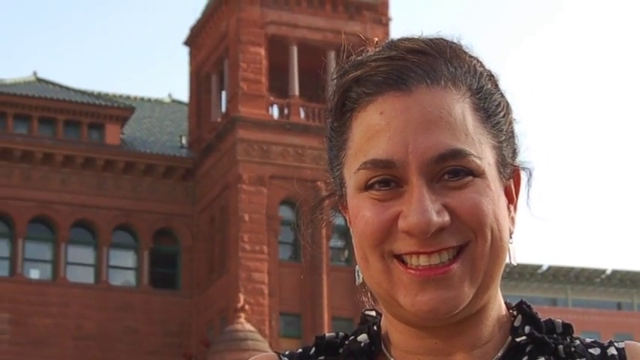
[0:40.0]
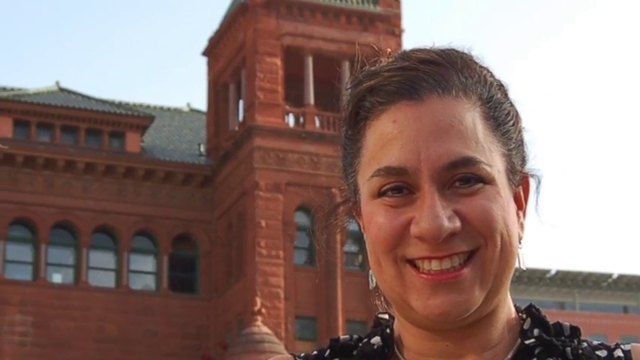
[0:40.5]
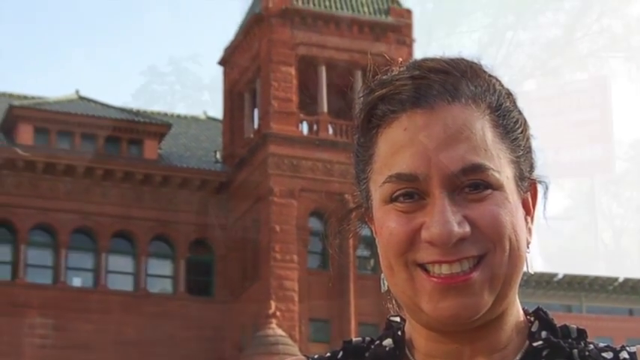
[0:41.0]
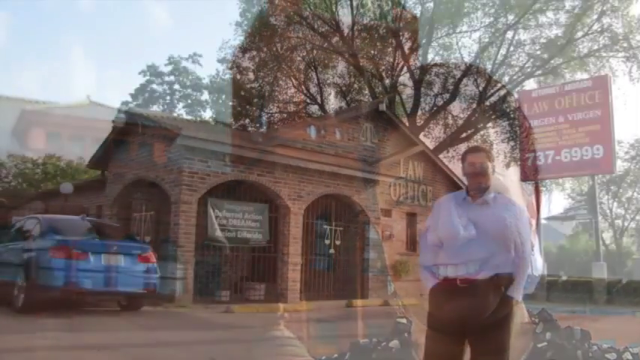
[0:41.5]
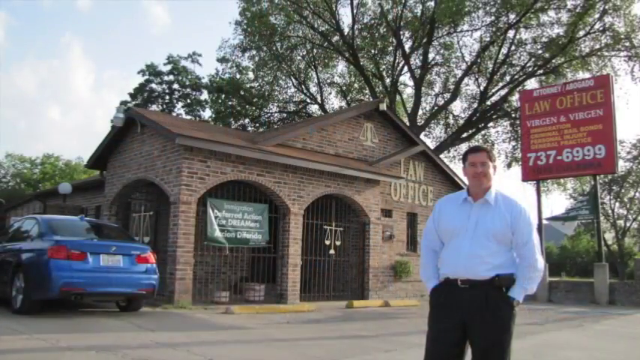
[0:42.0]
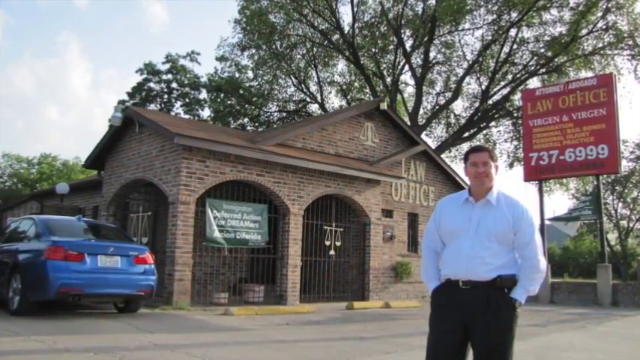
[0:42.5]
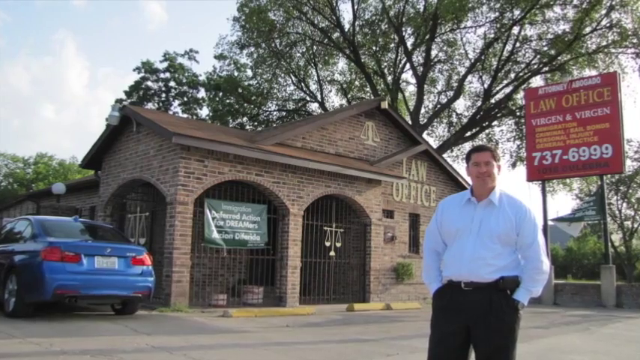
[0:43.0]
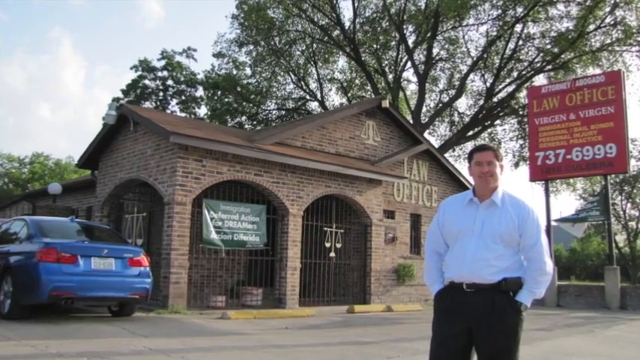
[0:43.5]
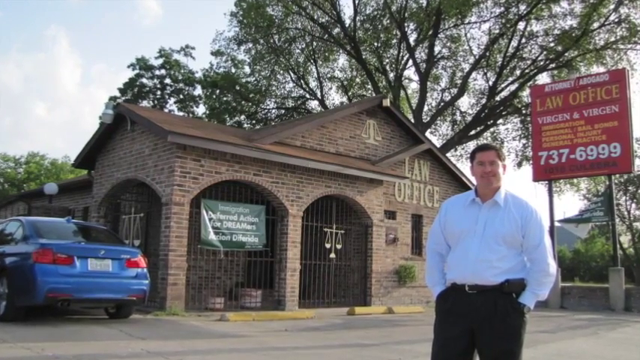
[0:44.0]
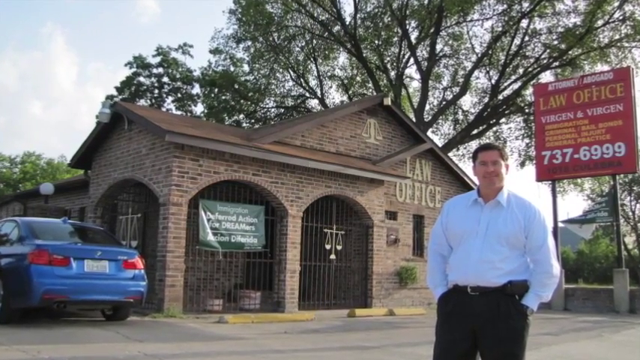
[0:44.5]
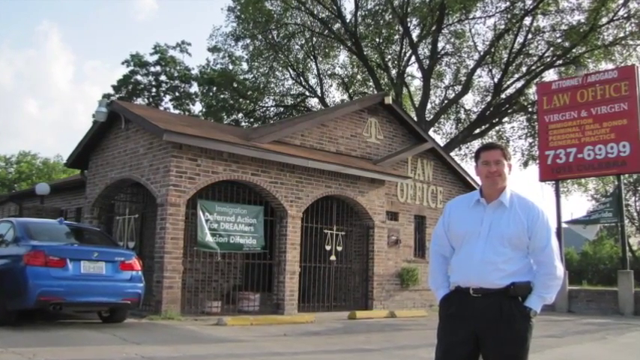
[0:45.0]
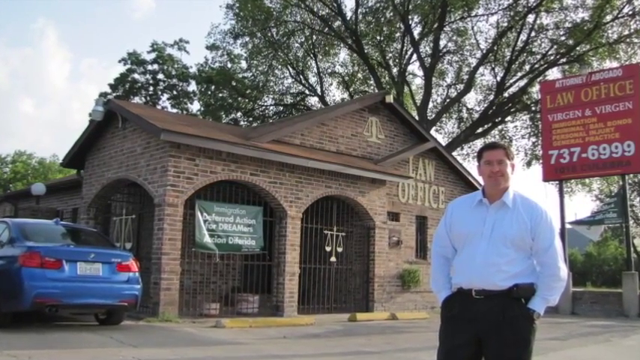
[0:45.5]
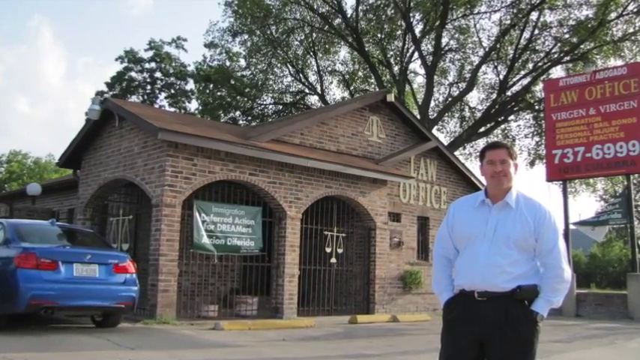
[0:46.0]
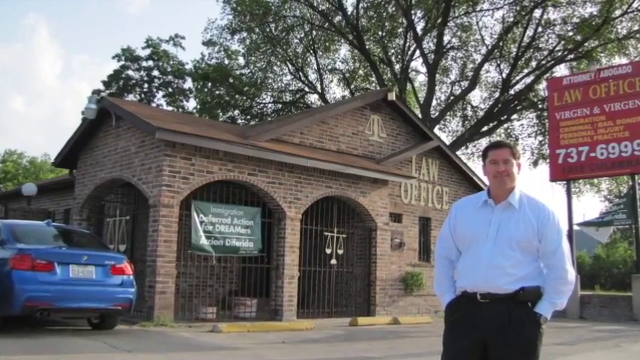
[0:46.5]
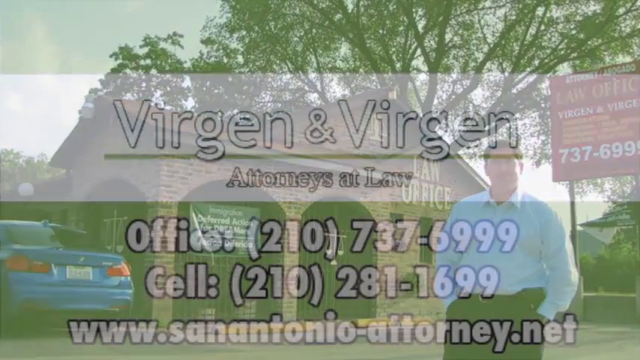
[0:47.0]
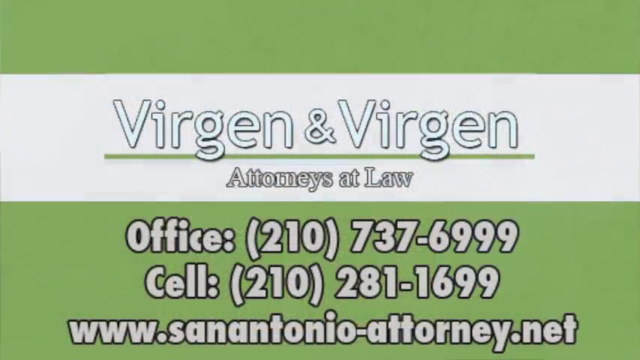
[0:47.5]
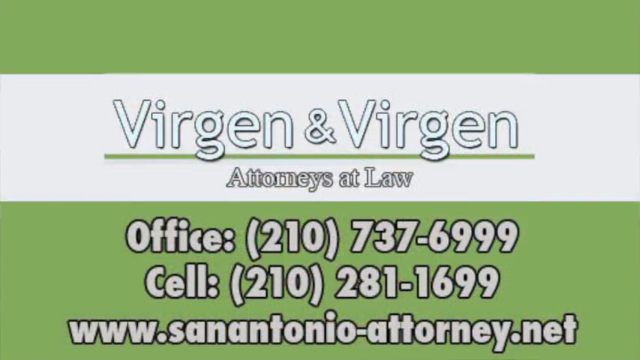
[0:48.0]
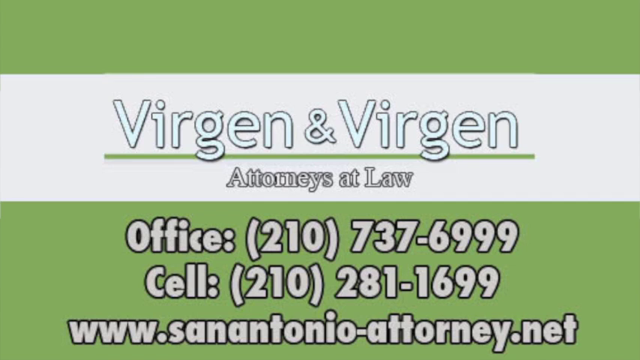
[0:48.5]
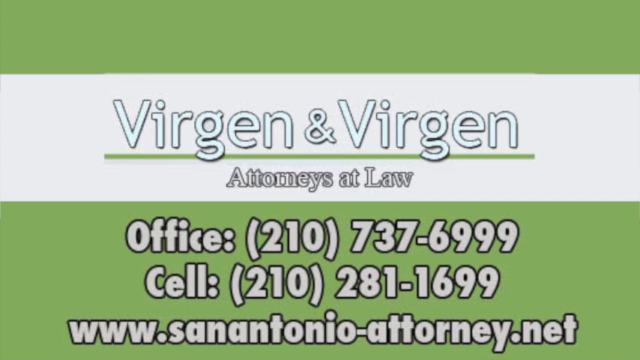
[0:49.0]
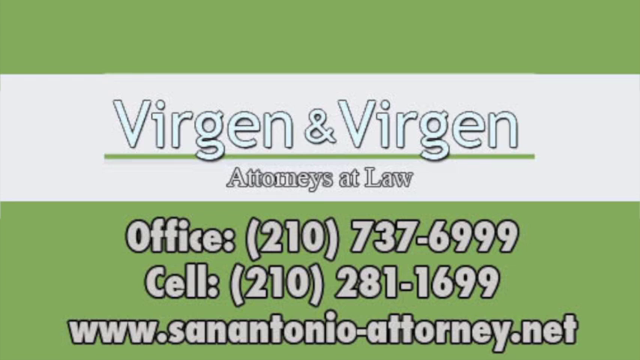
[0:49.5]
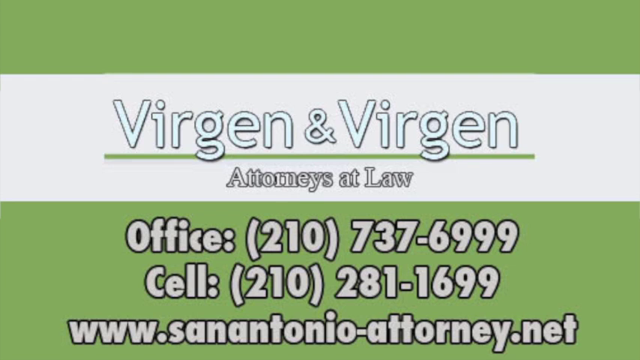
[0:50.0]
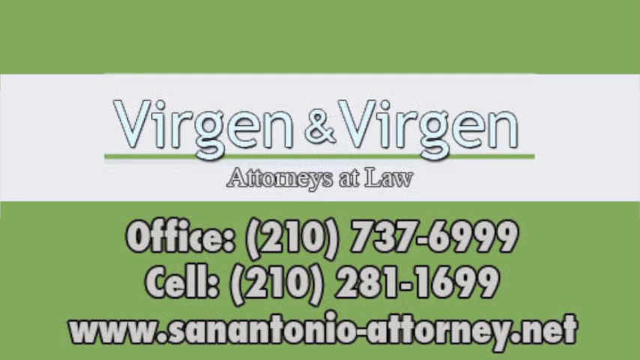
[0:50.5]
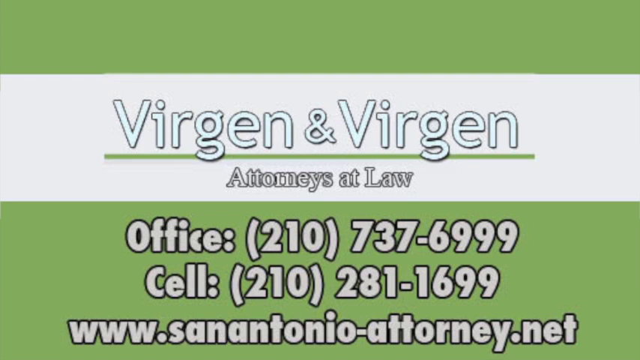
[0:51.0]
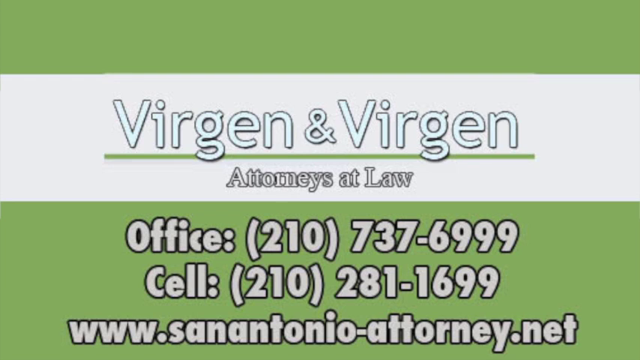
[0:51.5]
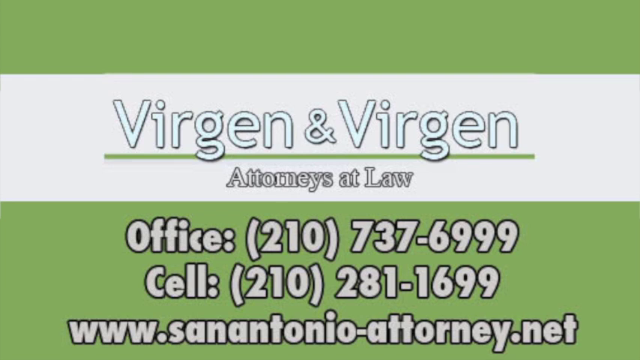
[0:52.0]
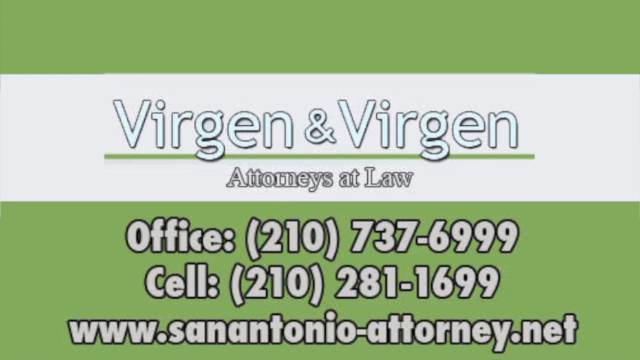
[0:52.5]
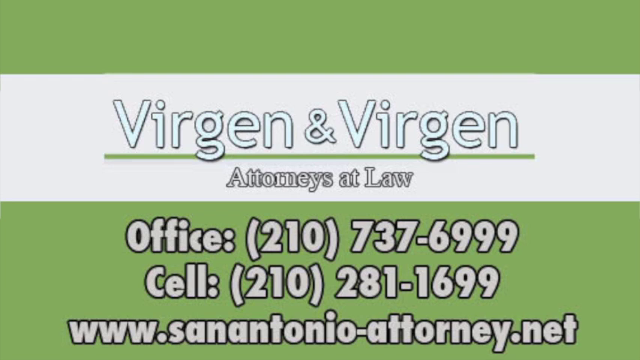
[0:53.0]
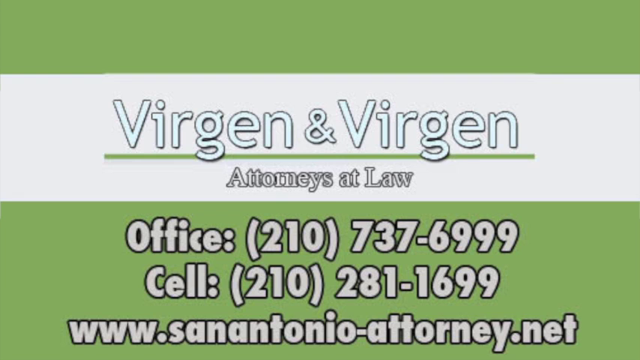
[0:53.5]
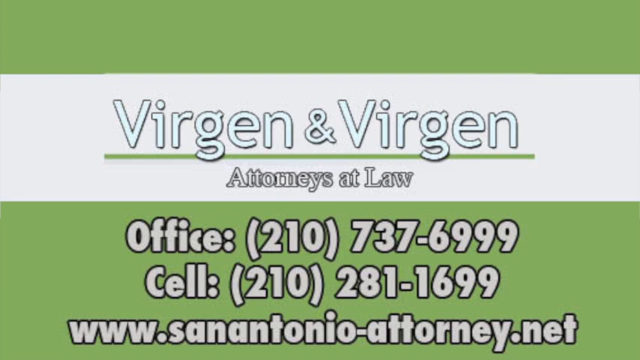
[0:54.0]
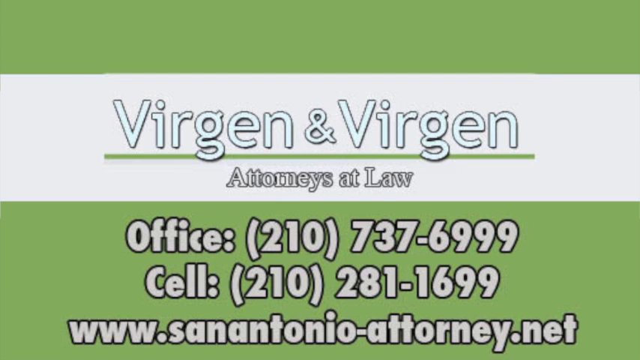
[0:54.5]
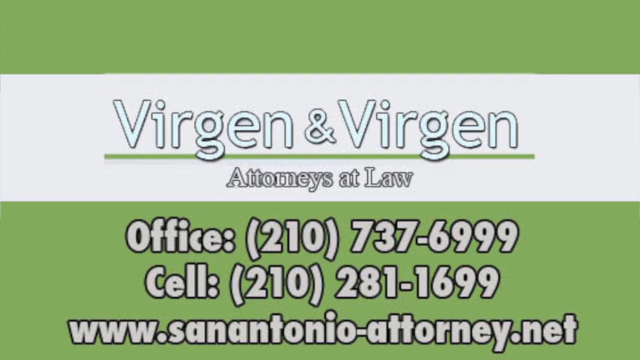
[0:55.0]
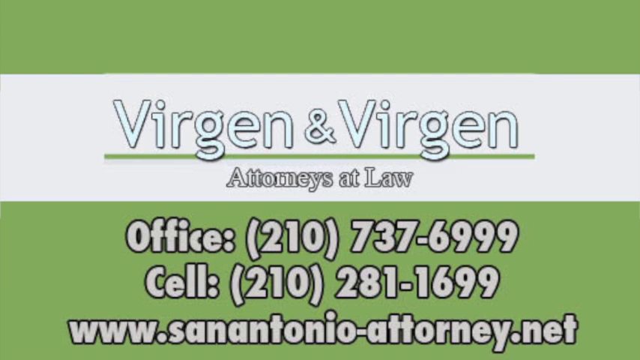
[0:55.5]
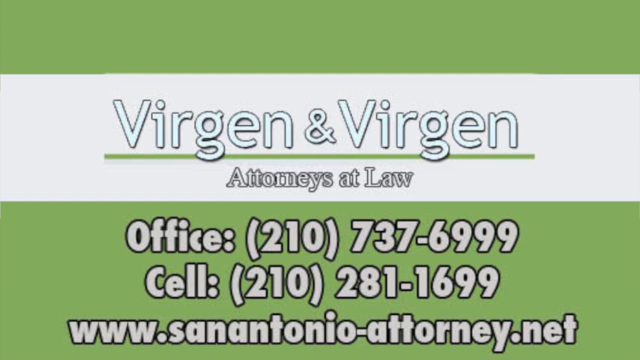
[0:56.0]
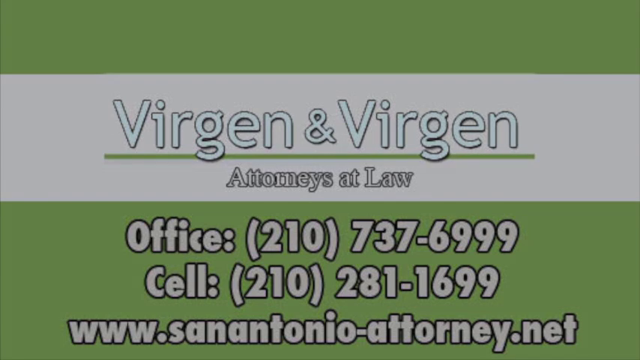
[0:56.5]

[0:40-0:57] The wife of the firm stands in front of a building, and the shot quickly dissolves to the husband standing in front of the law office, which says "law office" in gold lettering. It is a brick style building, with a blue BMW on the left side of the drive. The man wears a nice buttoned-up shirt with a black pantsuit. To his left is the Virgen and Virgen law office sign, showing their name, "law office", and their phone number at the bottom, 737-6999. The video then returns to the title slide from the beginning, reading "Virgen and Virgen Attorneys at Law" and giving the office and cell numbers as well as a website URL, "www.sanantonio-attorney.net", in the same white lettering with a black background. It fades out two seconds before the video finishes and goes straight to black.